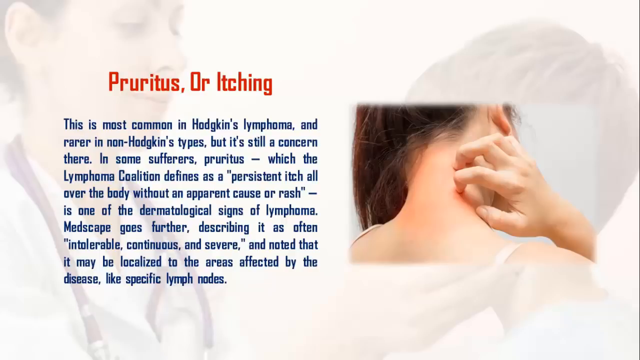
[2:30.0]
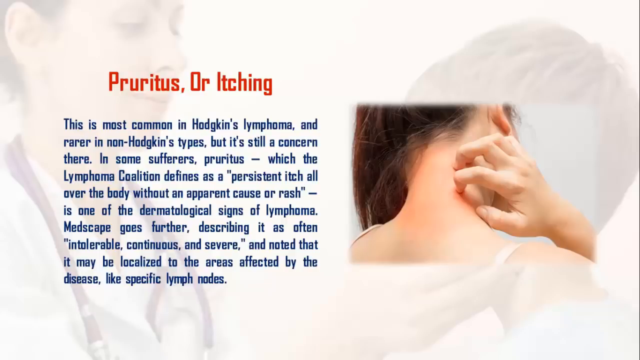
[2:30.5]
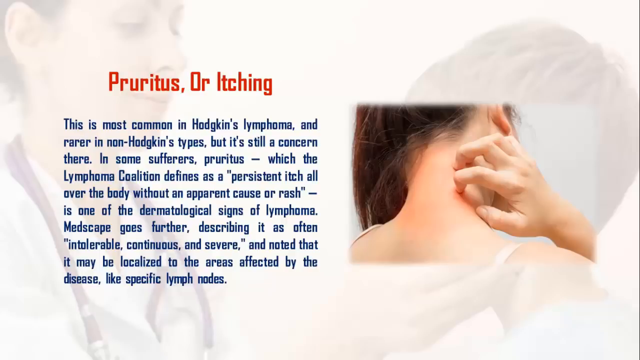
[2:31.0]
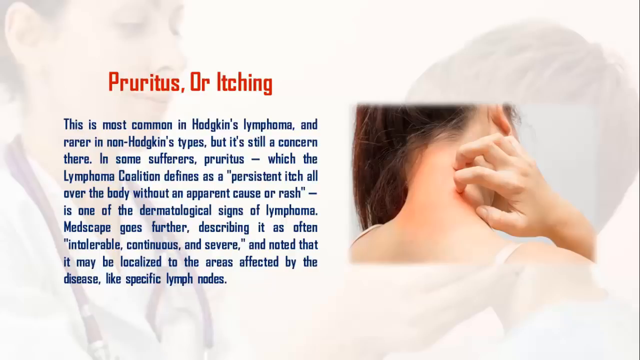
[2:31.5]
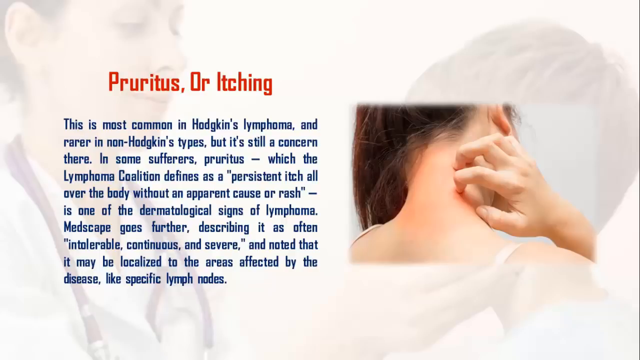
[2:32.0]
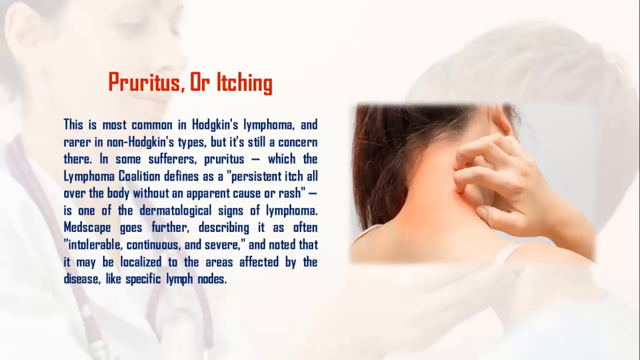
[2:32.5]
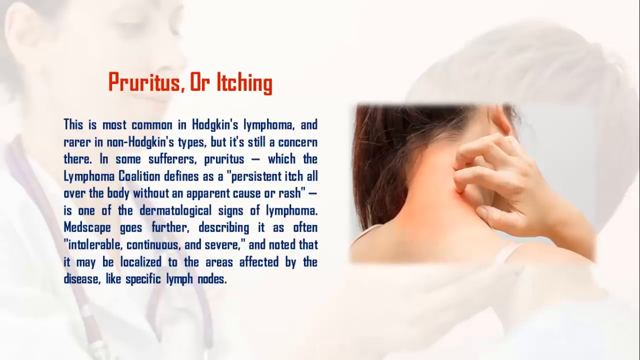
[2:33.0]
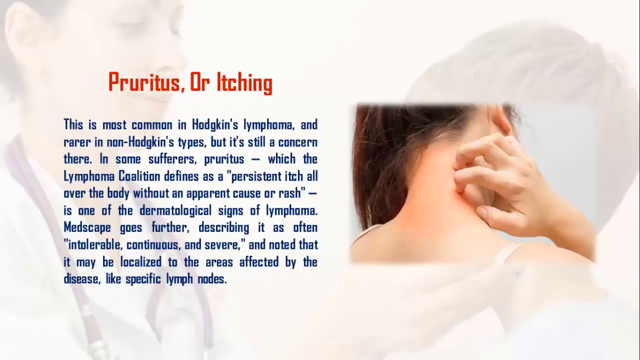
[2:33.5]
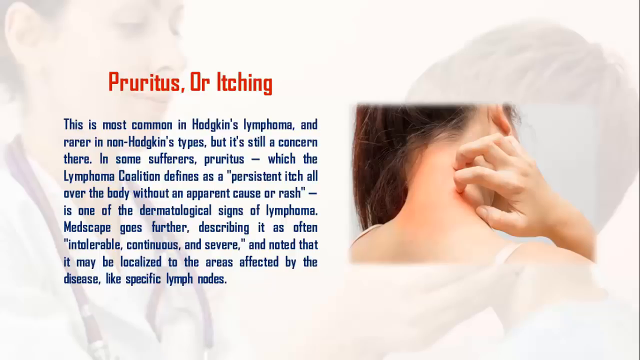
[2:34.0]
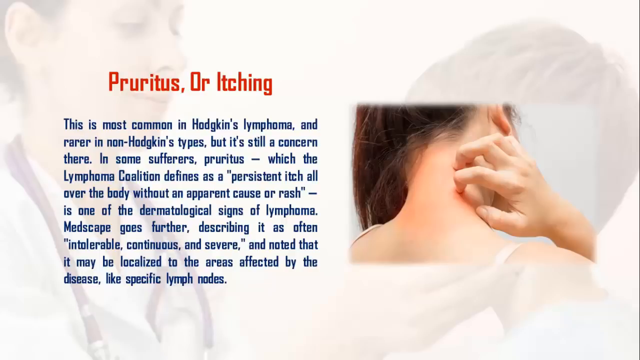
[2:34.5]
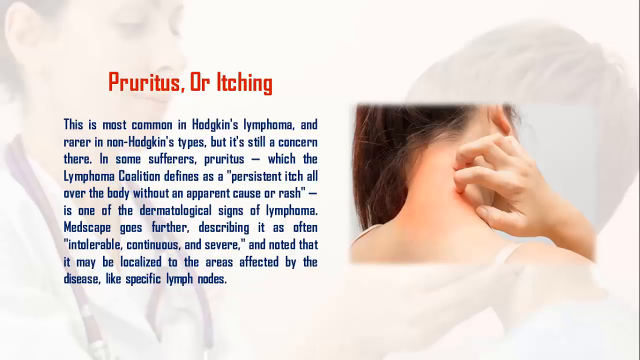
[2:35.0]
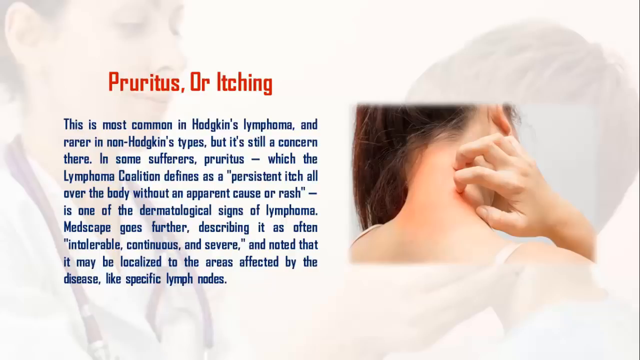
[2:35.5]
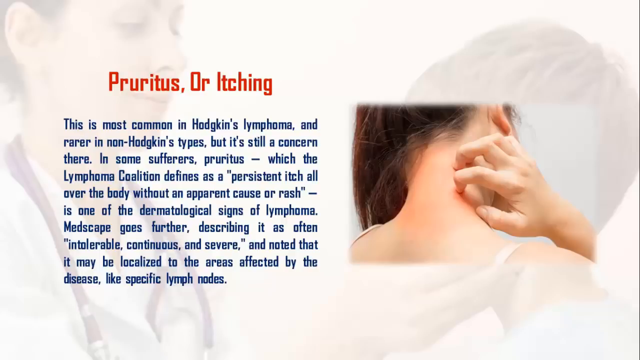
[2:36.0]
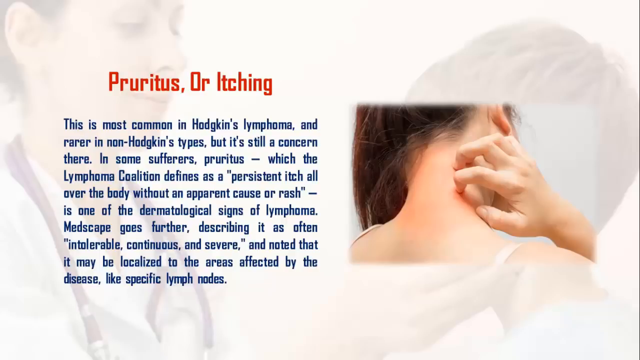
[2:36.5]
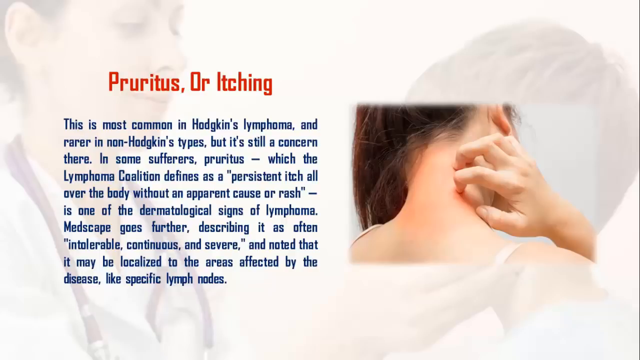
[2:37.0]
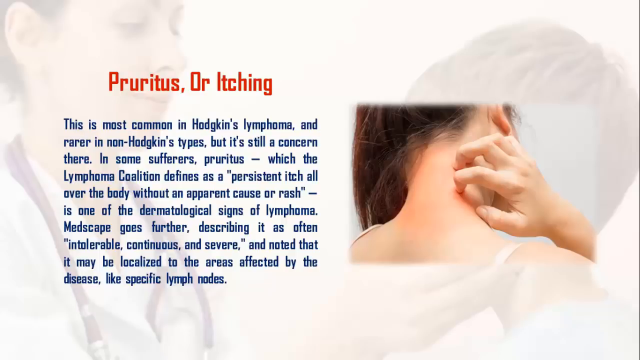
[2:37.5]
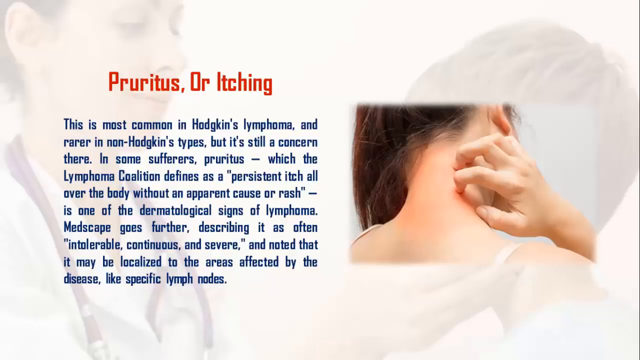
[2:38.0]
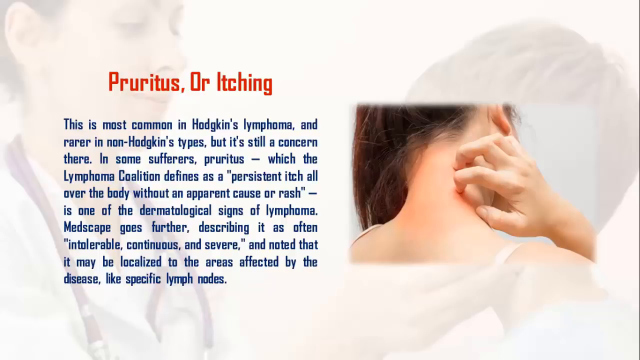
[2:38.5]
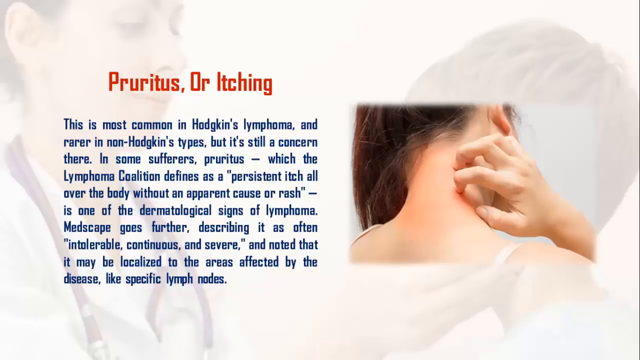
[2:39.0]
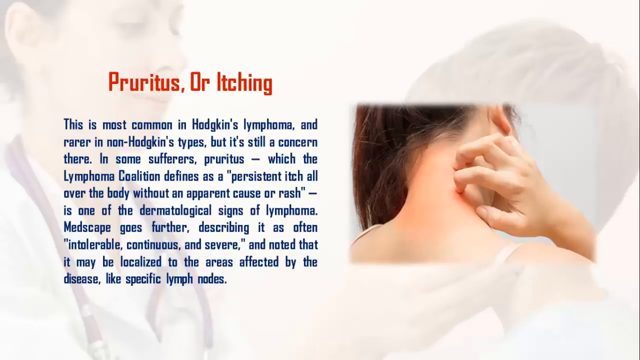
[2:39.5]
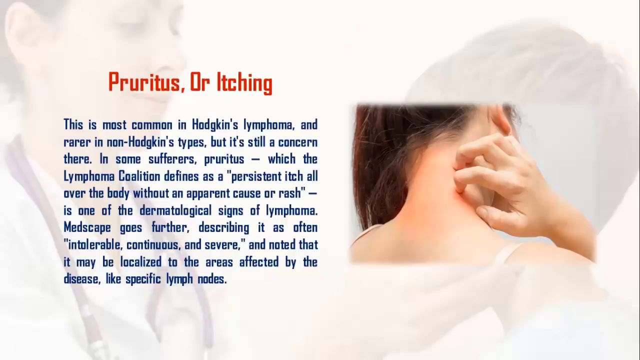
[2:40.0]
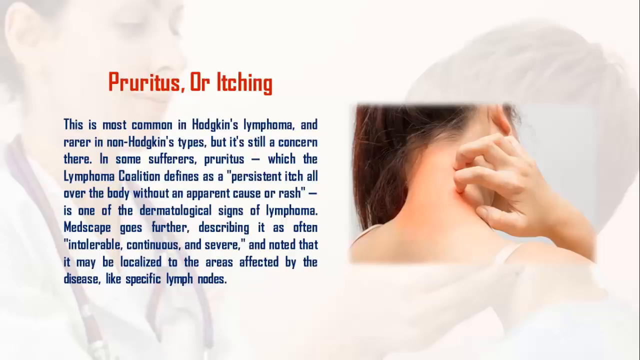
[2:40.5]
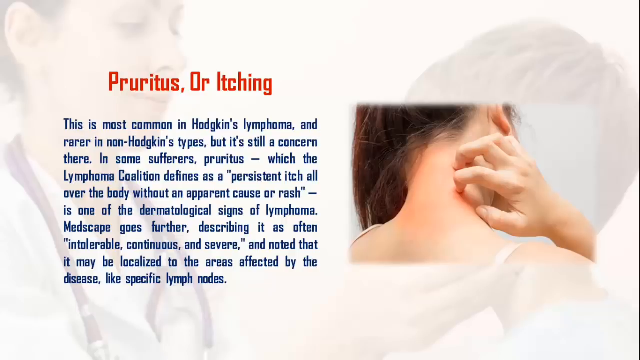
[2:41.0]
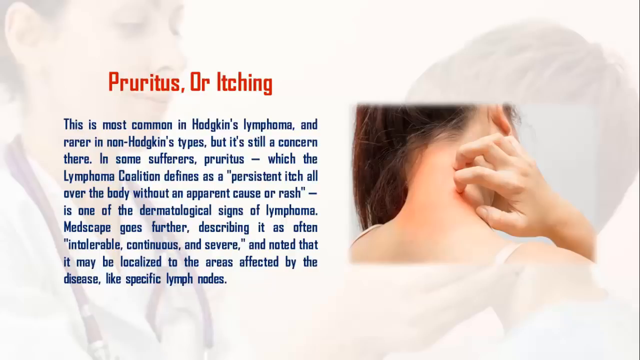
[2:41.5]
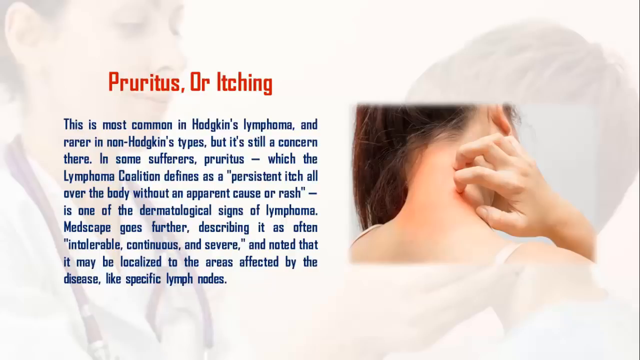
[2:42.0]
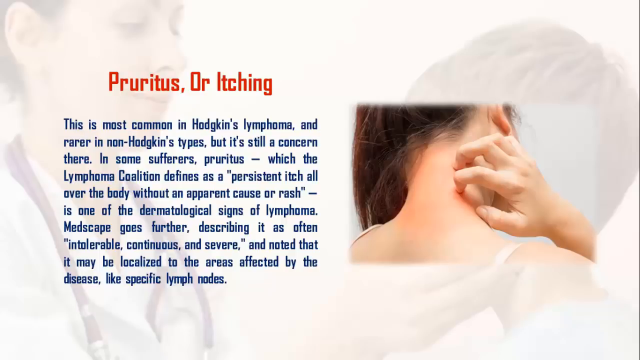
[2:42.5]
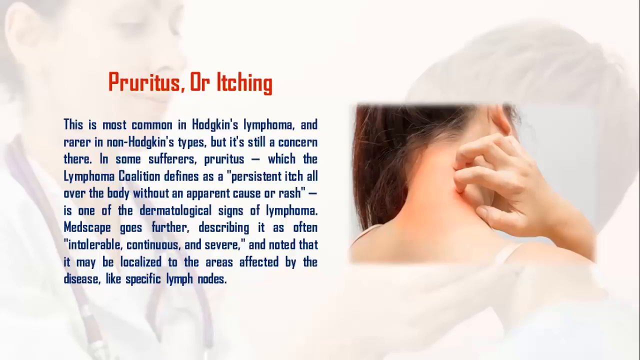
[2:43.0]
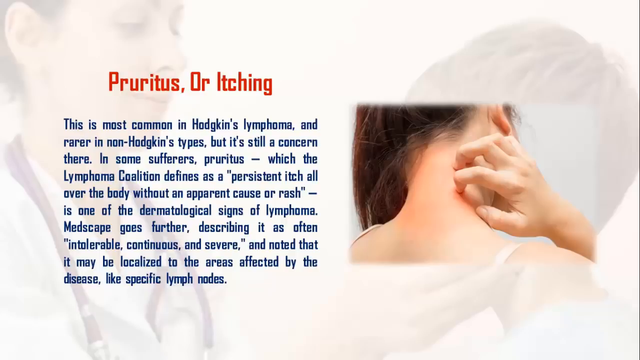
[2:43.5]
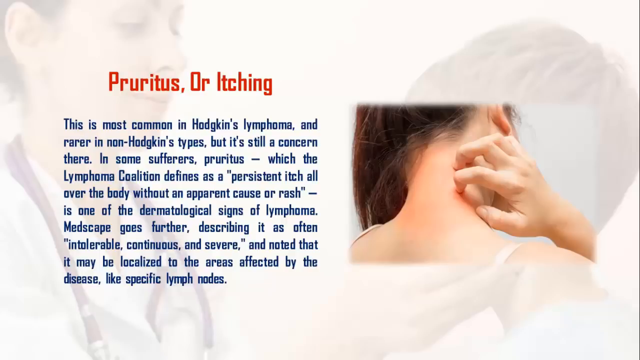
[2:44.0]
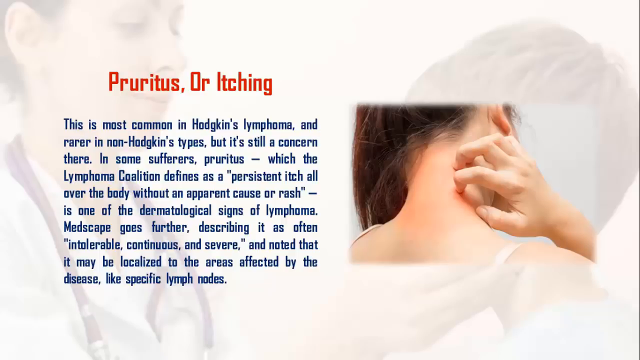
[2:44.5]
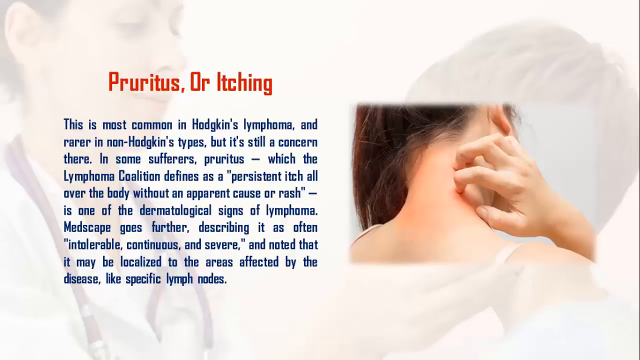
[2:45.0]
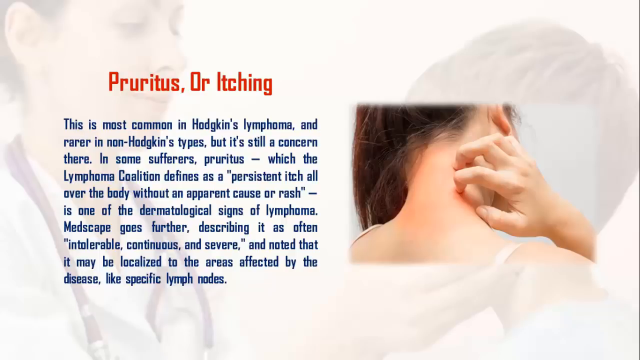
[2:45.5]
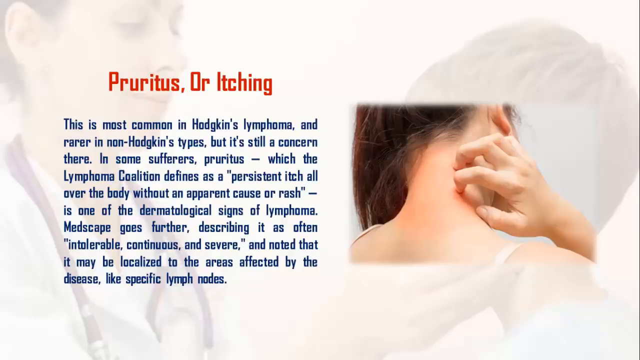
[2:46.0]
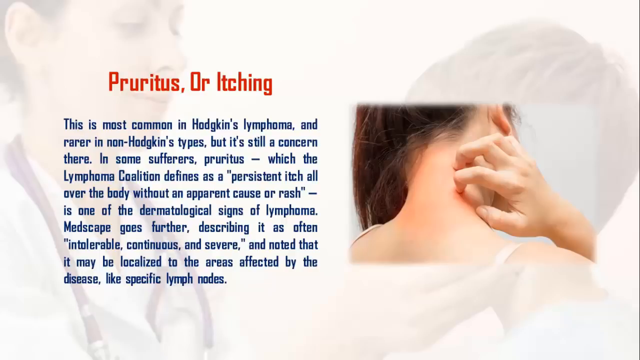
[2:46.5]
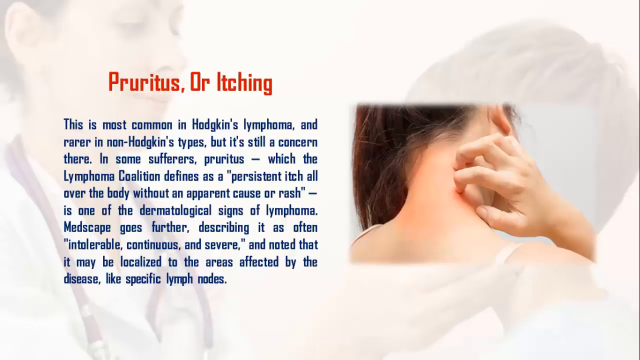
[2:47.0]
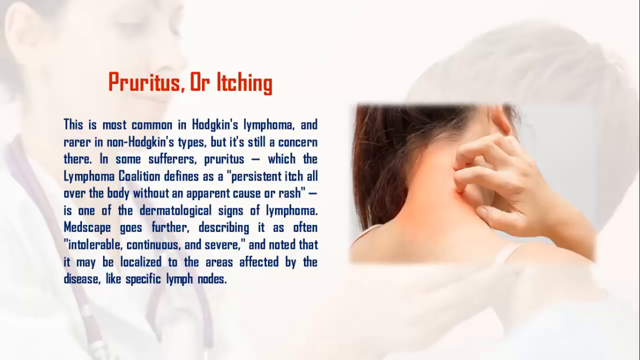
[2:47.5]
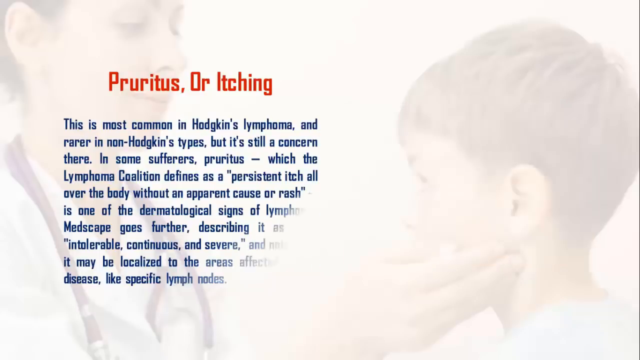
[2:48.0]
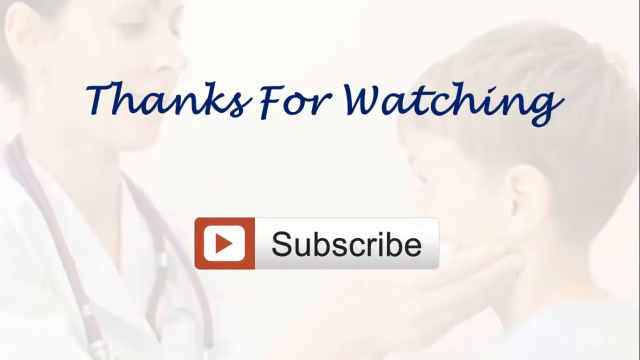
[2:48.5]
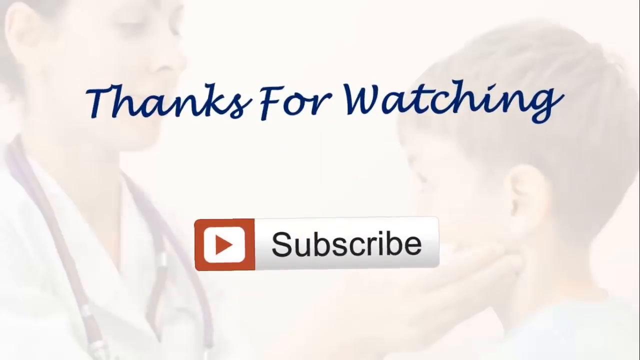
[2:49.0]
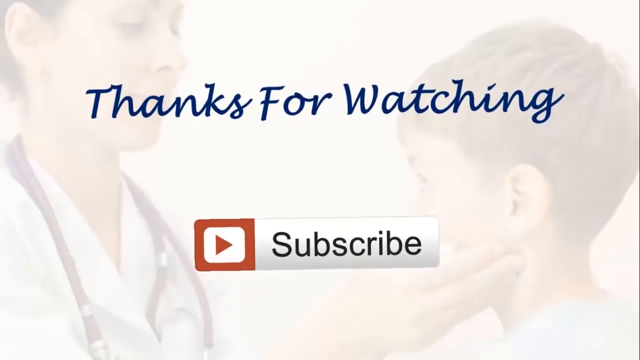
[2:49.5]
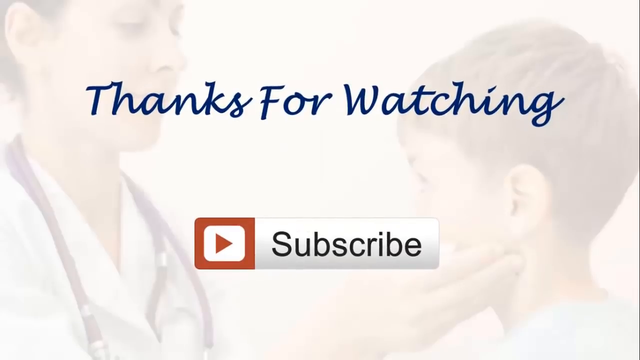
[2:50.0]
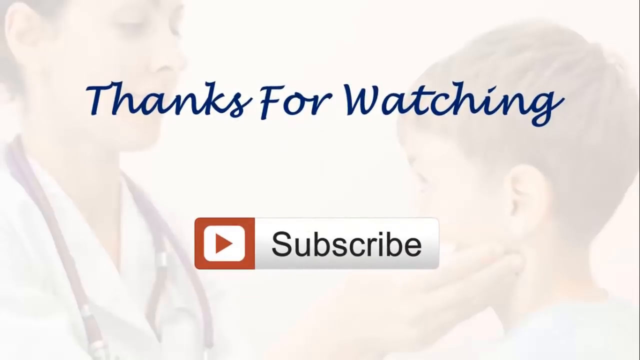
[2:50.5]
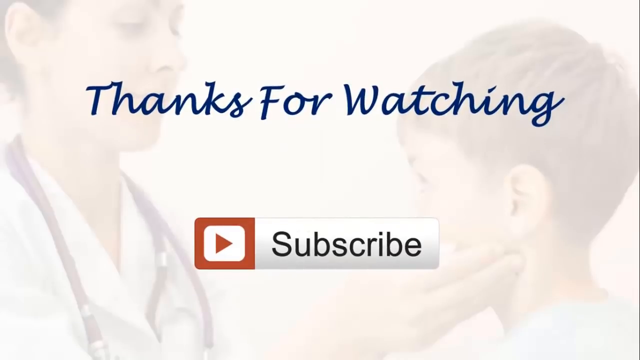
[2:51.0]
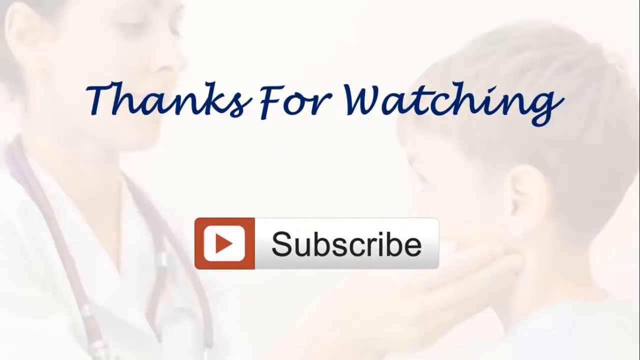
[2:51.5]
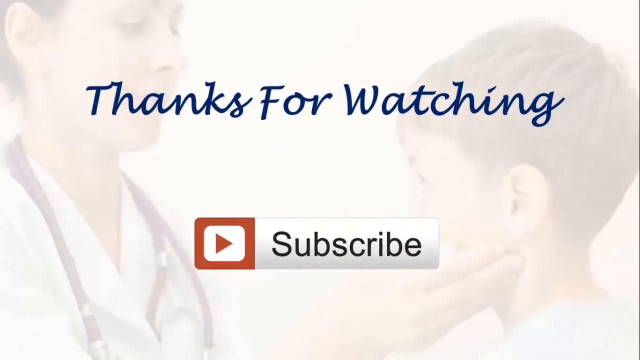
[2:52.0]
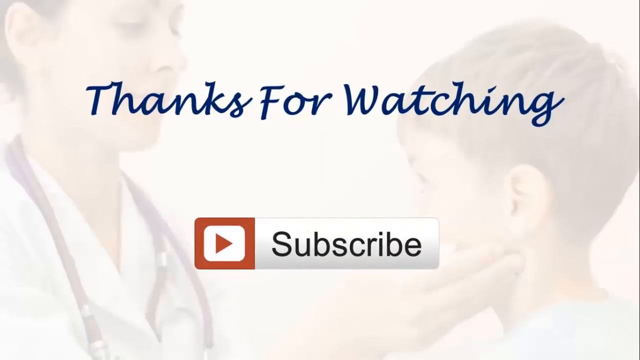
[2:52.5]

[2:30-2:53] The pruitis picture and information disappear, leaving the white fuzzy background. The lady doctor, with short light brown hair, a white lab jacket and a stethoscope around her neck, is touching the young man on the right, who has short brown hair; she touches his neck behind his ear, feeling the lymph nodes. The words "thanks for watching" come across the screen in blue. Below that is a small red square with a triangle inside pointing to the right, and inside that a white rectangle with "subscribe" in black letters.